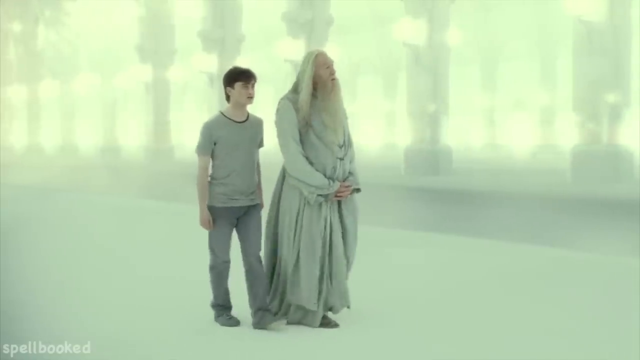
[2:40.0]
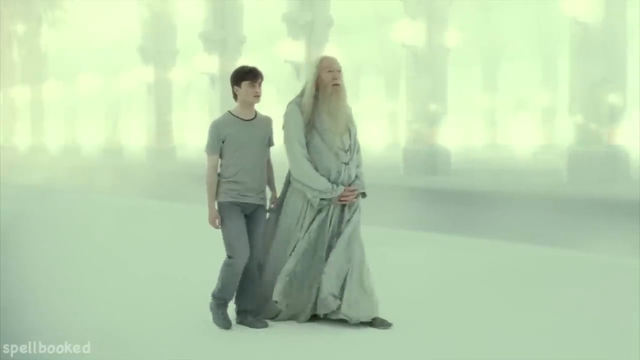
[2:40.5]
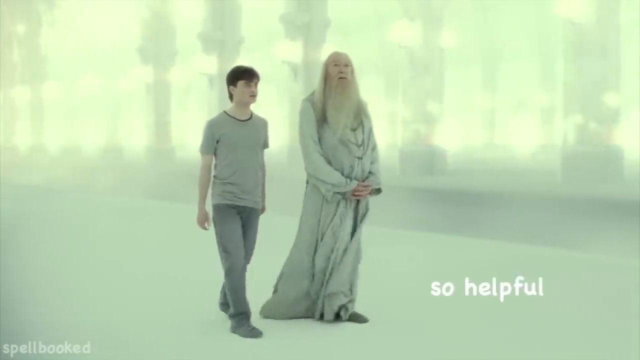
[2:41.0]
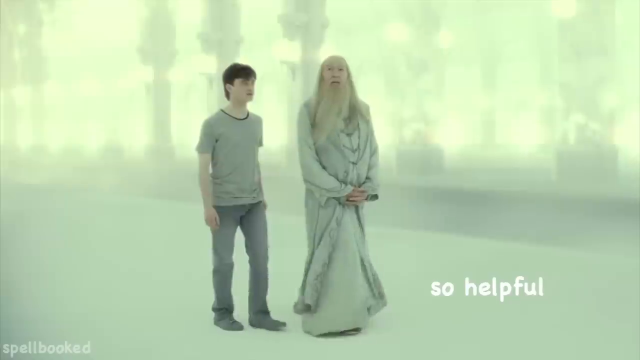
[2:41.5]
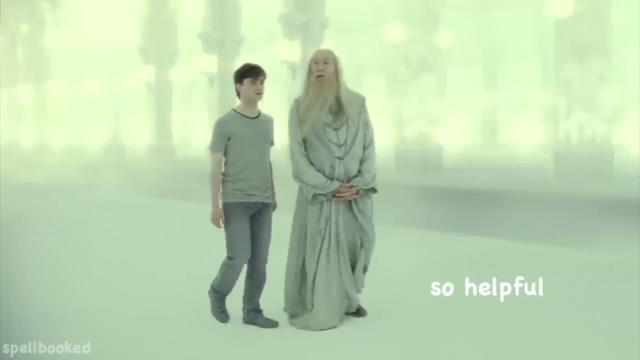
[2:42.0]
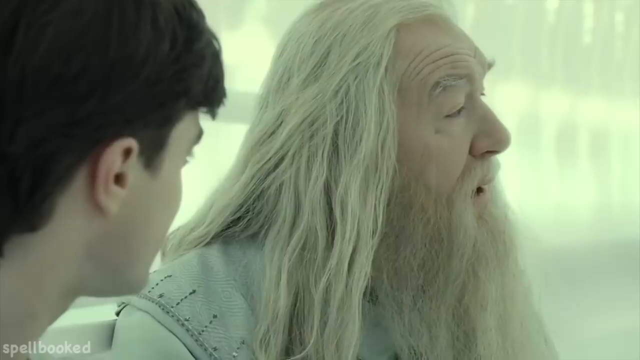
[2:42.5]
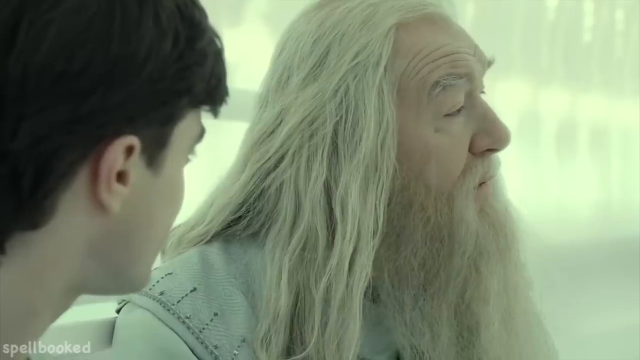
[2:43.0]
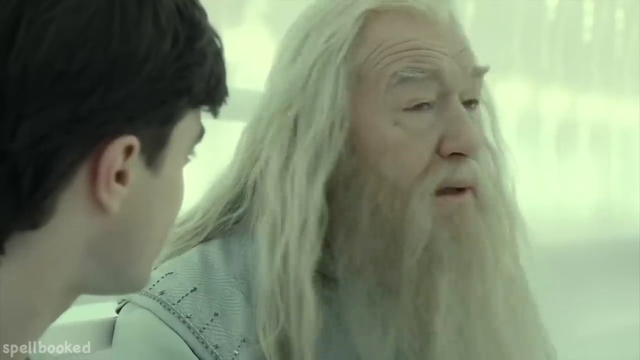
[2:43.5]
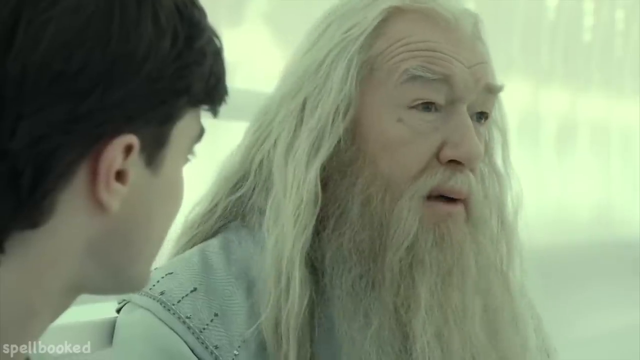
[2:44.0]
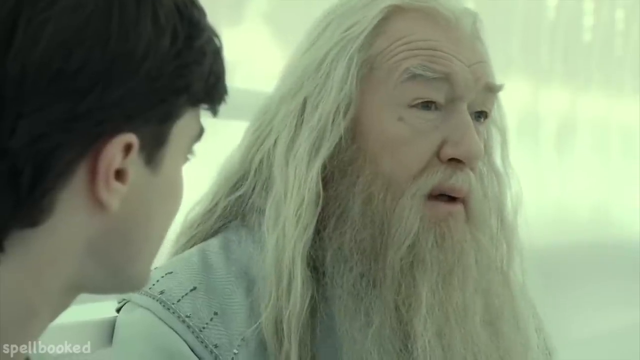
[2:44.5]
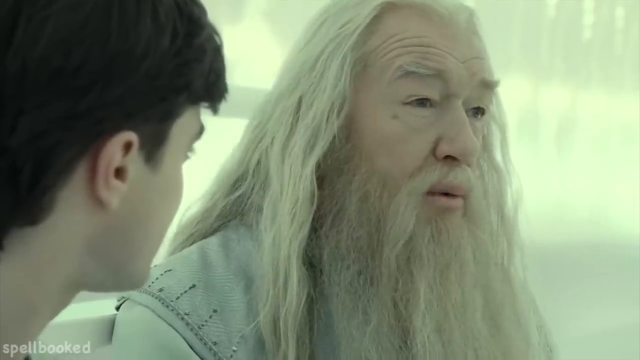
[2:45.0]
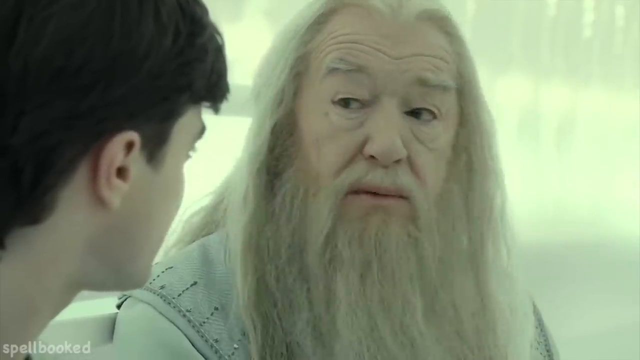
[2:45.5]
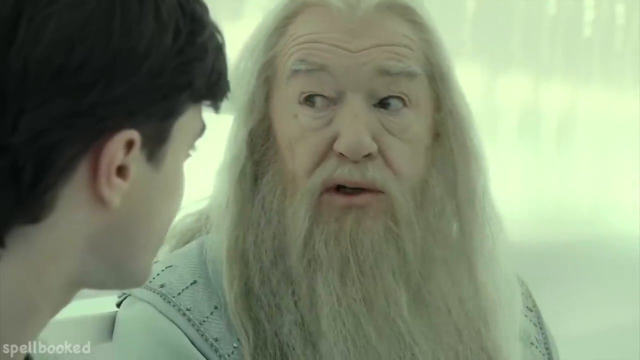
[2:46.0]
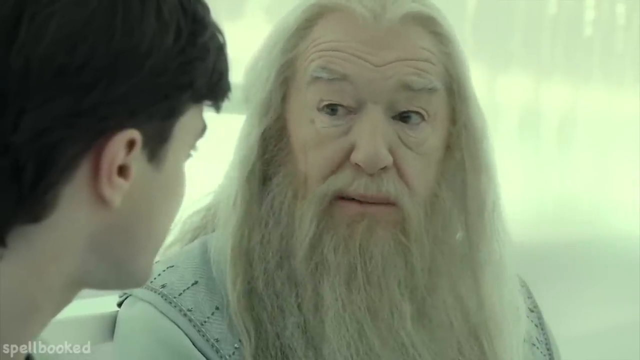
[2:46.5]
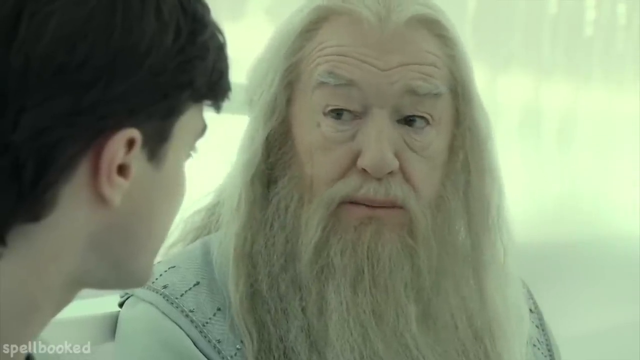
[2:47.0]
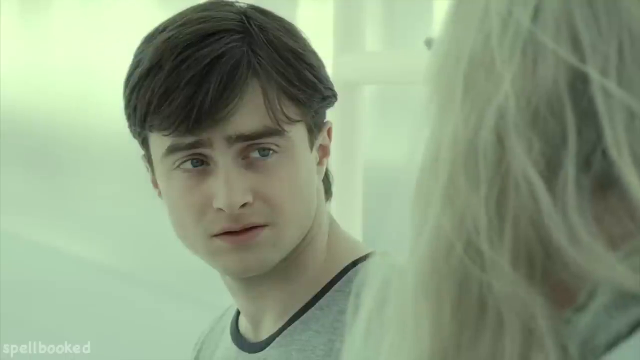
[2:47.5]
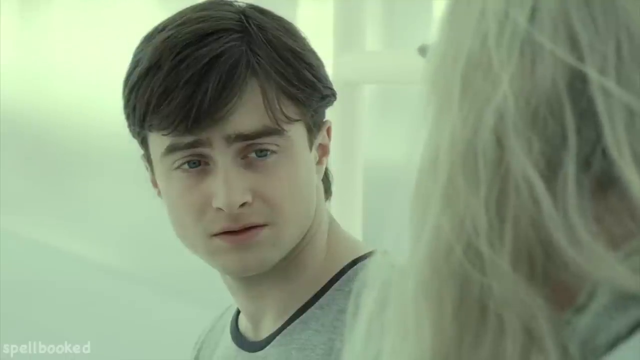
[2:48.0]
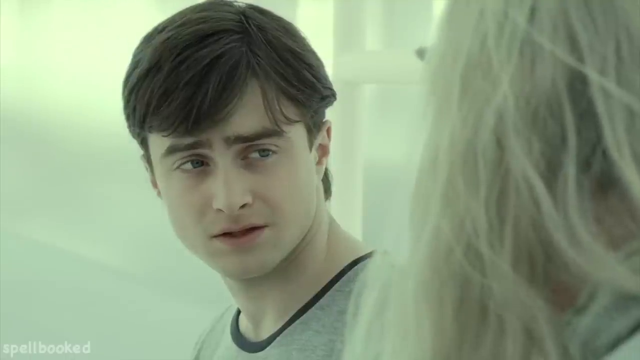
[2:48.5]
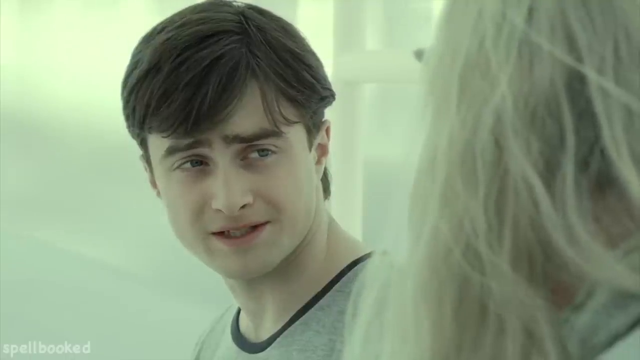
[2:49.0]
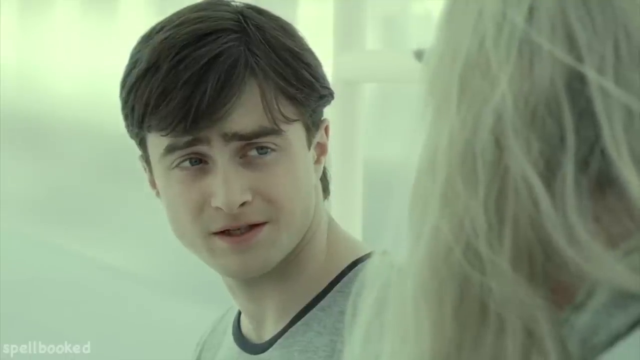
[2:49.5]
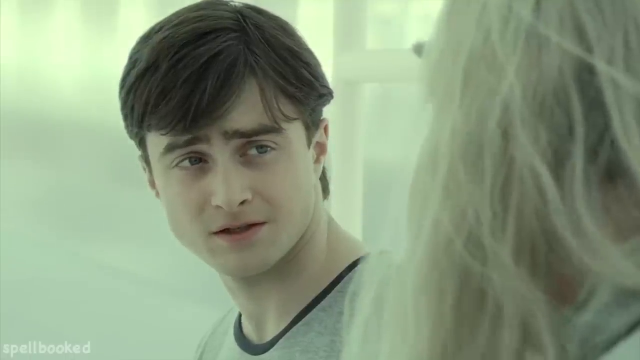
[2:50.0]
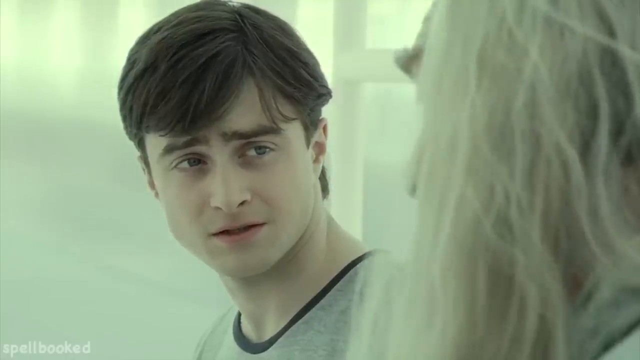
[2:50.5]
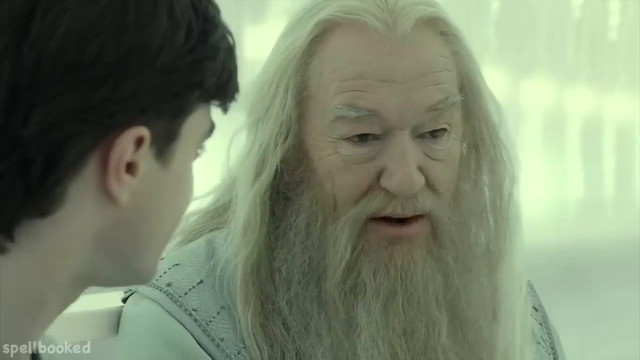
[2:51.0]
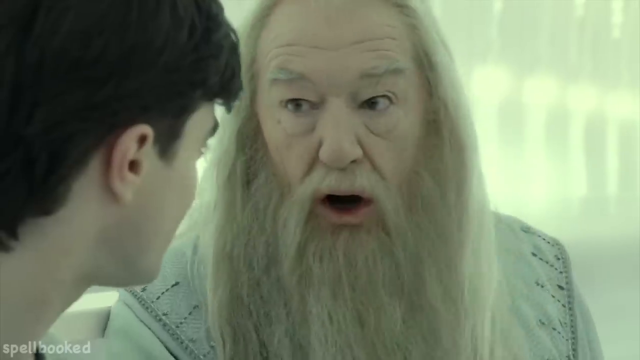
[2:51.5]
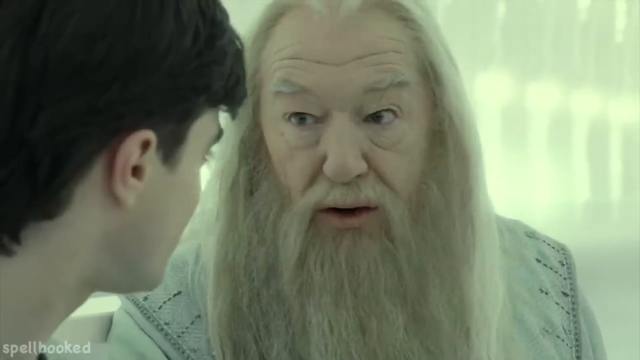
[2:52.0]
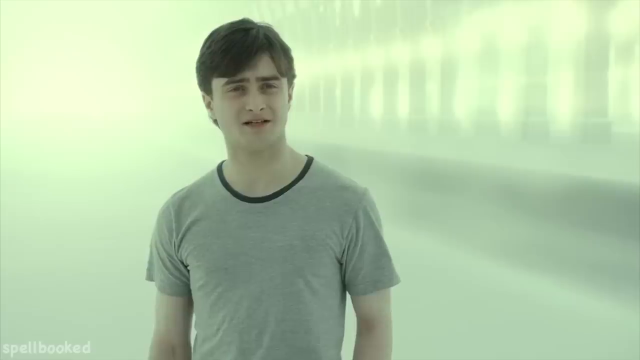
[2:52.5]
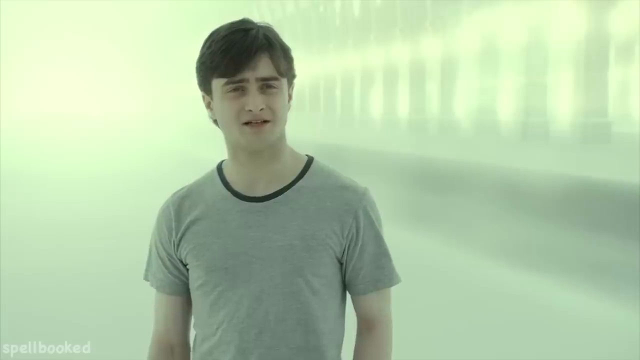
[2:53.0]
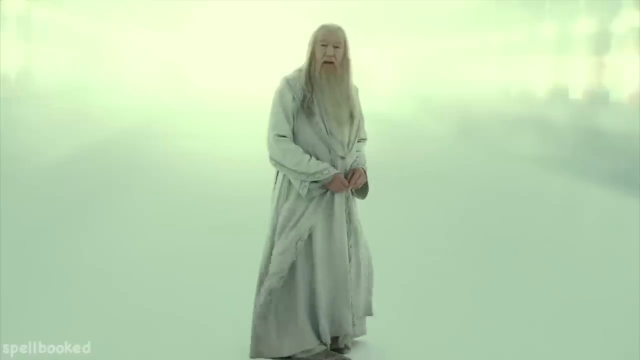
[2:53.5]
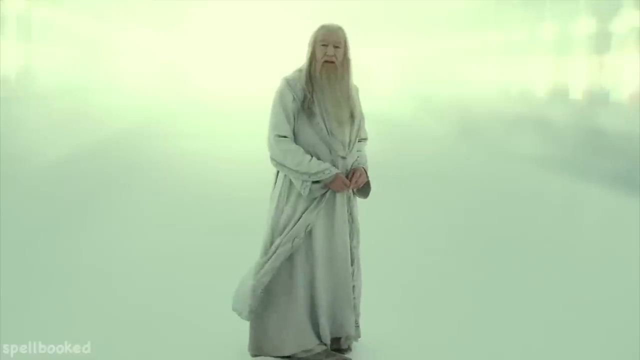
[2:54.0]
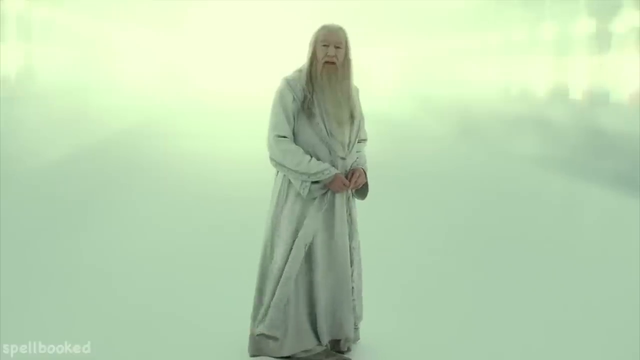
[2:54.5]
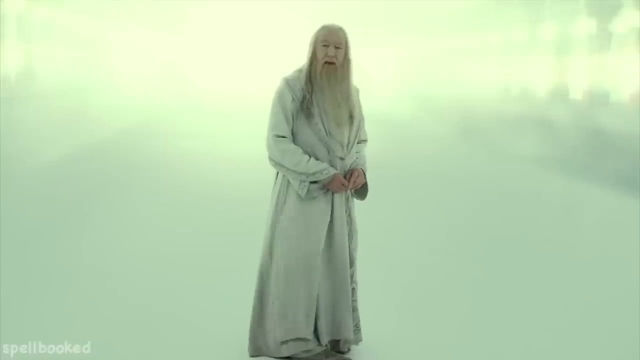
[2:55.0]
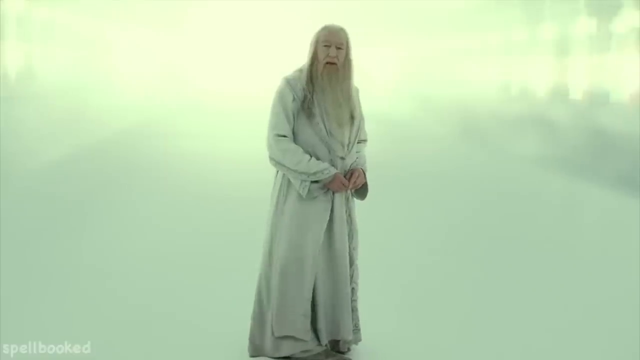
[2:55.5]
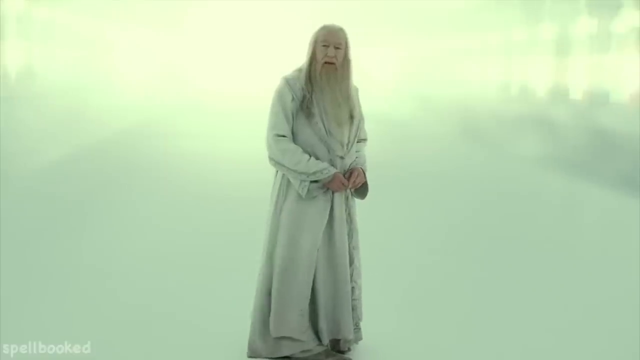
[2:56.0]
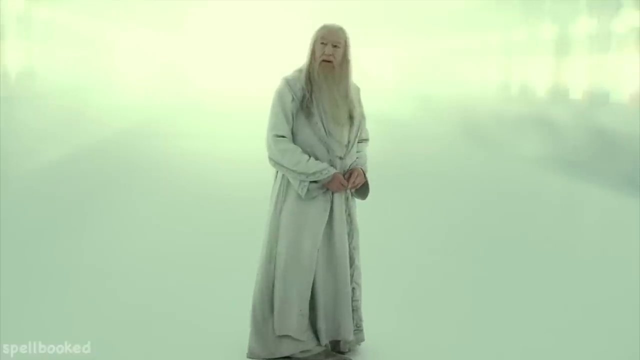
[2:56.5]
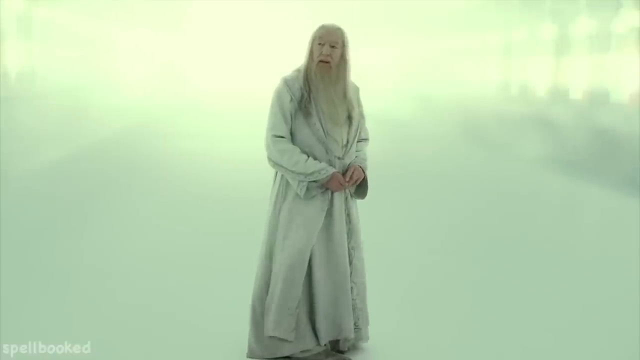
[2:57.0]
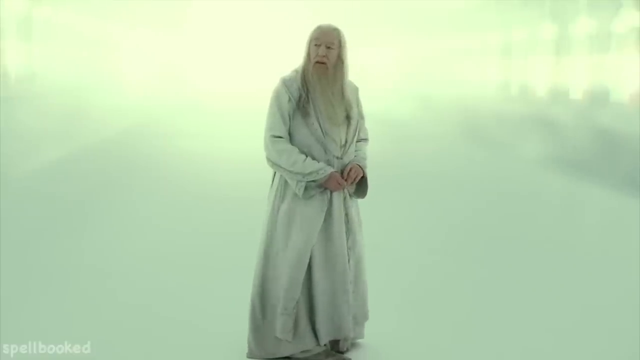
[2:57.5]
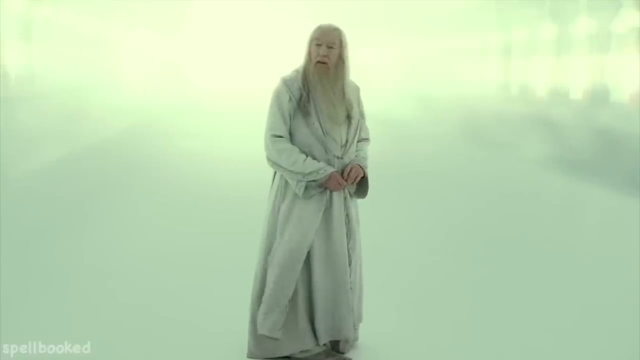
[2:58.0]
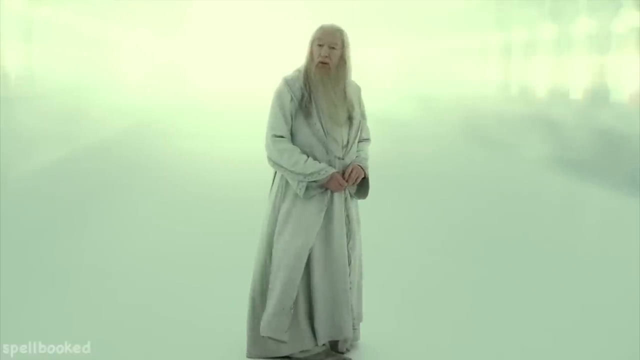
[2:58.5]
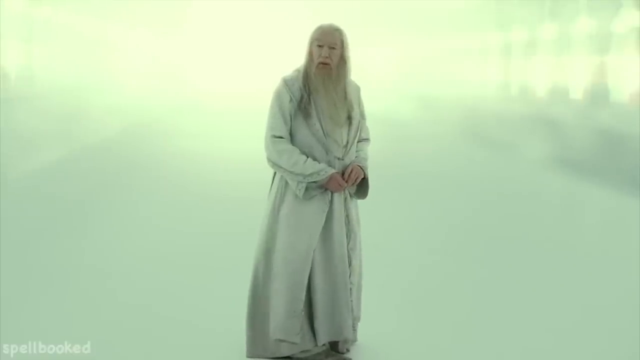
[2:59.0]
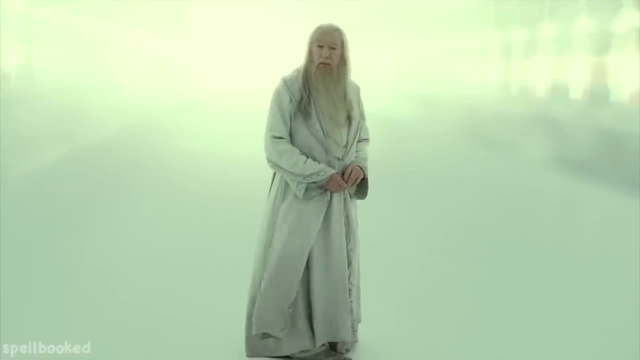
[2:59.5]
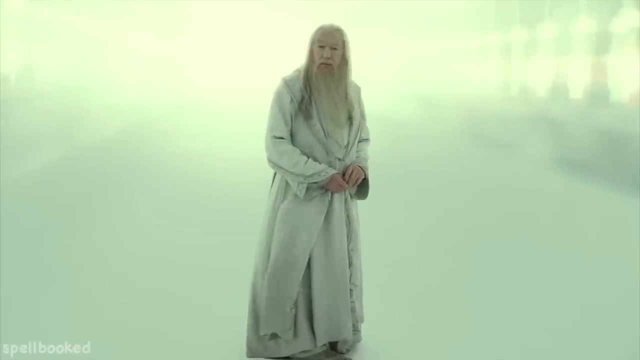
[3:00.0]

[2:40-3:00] Harry and Dumbledore are in an ethereal, heaven-like place, apparently right after Harry and Voldemort fought at the end of the last movie. Both look calm. Dumbledore wears all white and has his hair down. Harry is not wearing his glasses, and they are kind of just talking to each other. They then appear to separate somewhat, and there is a really bright white light in the background behind Dumbledore. Harry wears street clothes like jeans and a t-shirt, and Dumbledore appears not to be wearing any shoes. There is a solid brick fence that probably stands about four or five feet off the ground, with giant pillars all along it. The text "So helpful" pops up on the screen.